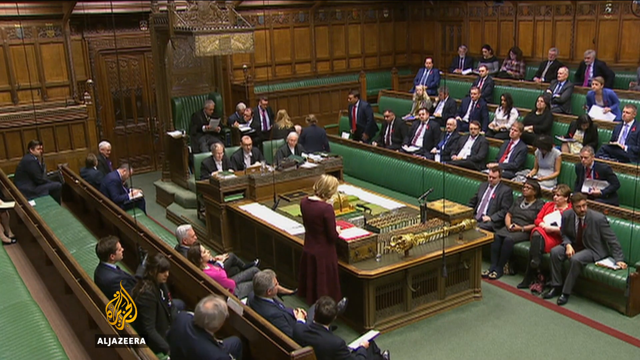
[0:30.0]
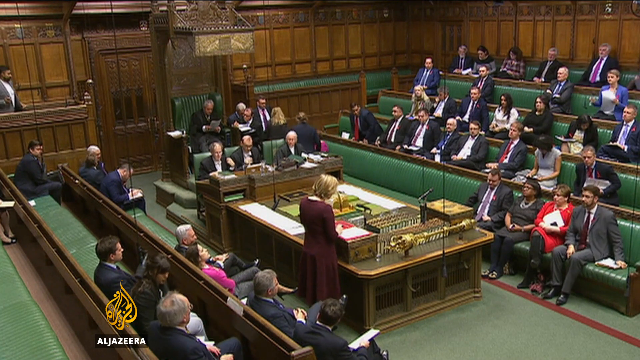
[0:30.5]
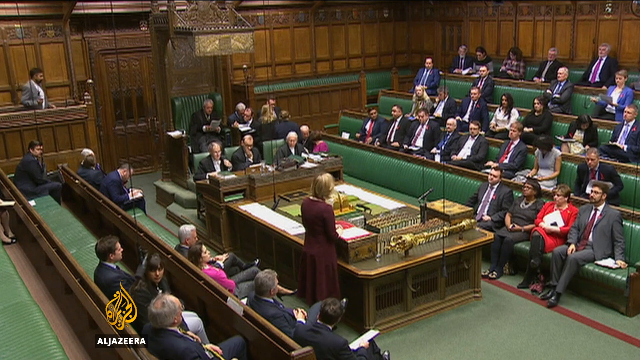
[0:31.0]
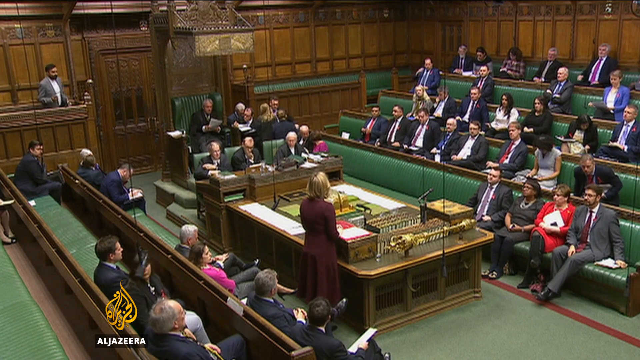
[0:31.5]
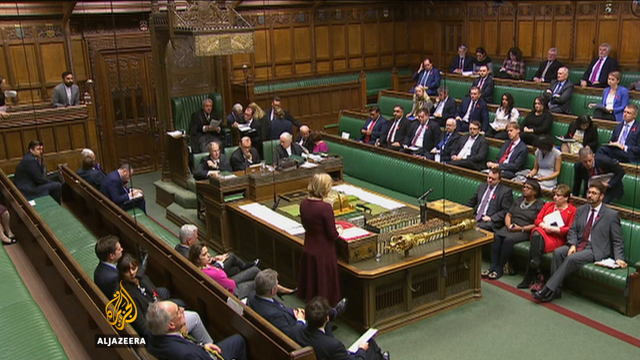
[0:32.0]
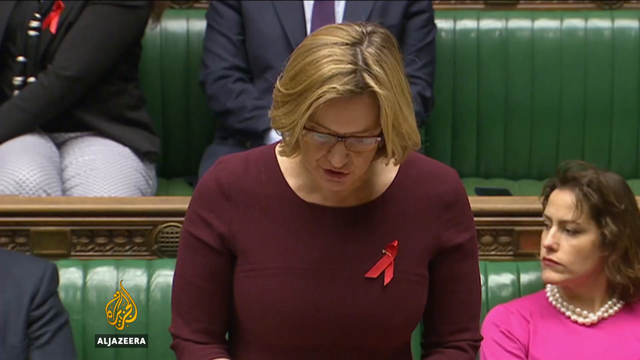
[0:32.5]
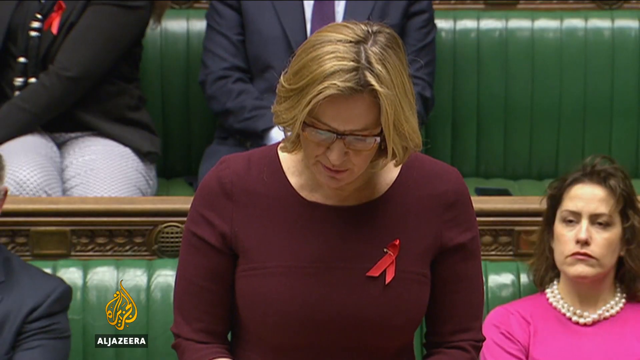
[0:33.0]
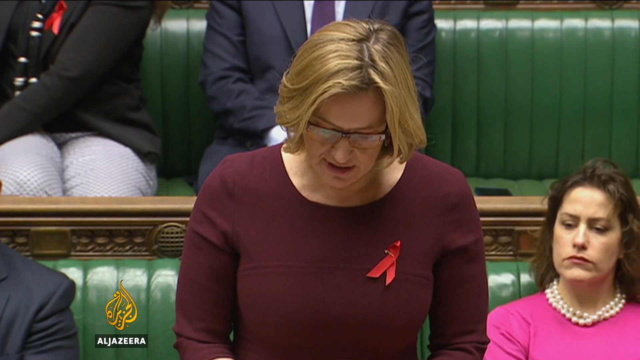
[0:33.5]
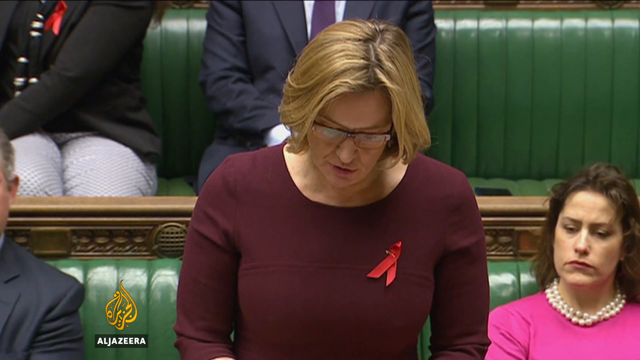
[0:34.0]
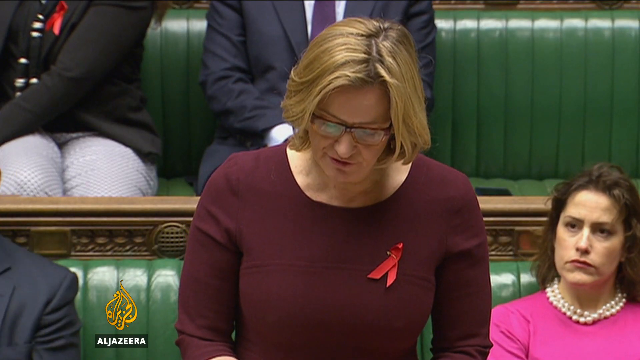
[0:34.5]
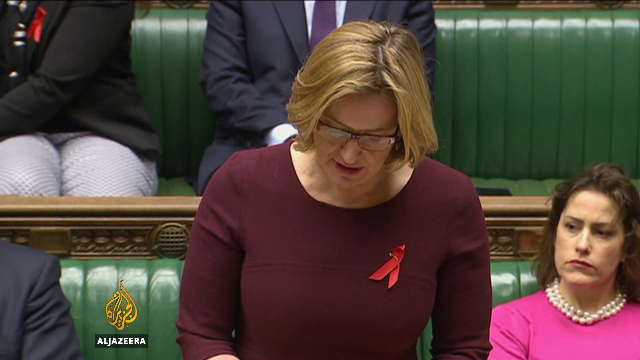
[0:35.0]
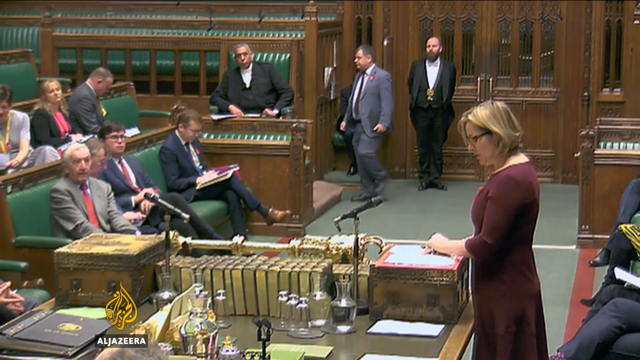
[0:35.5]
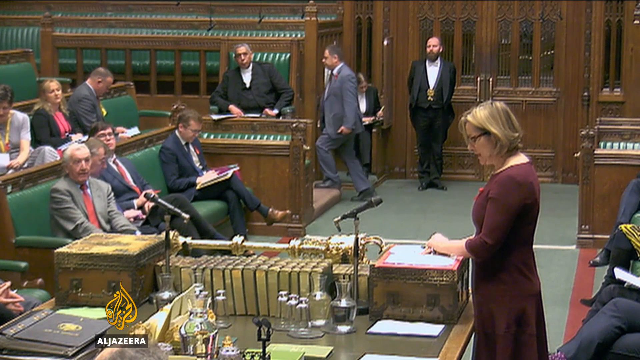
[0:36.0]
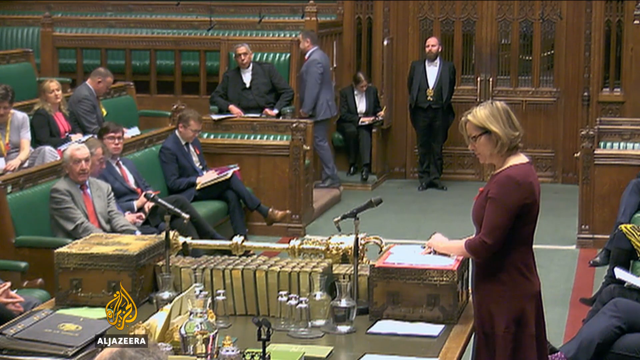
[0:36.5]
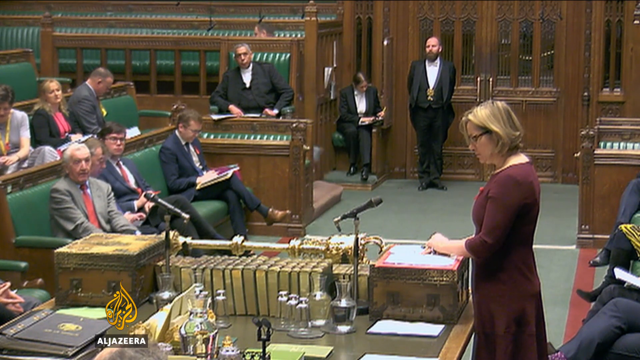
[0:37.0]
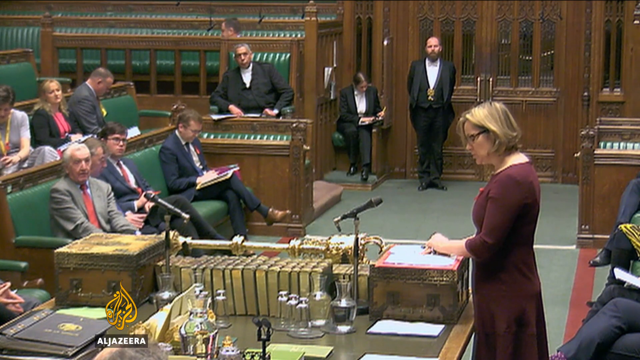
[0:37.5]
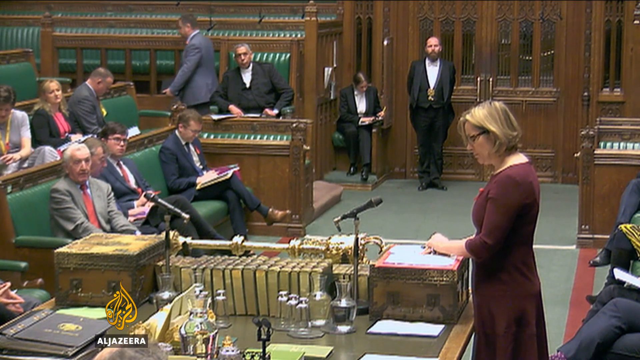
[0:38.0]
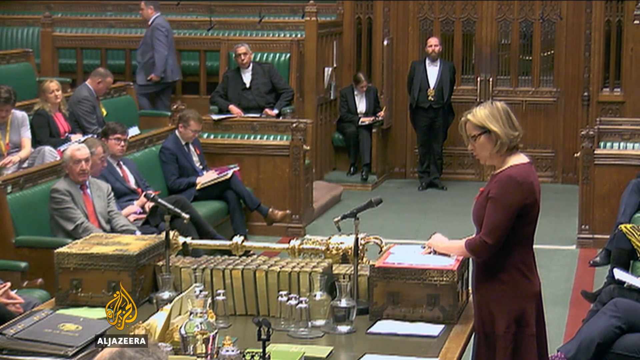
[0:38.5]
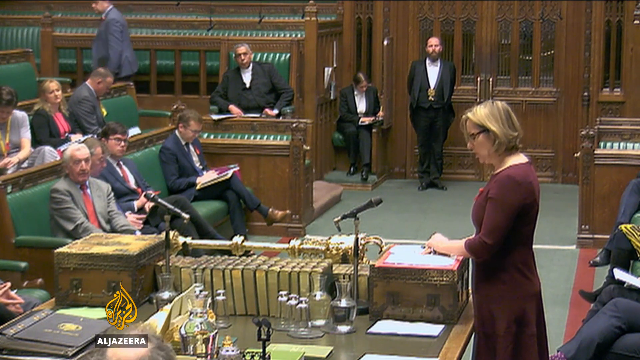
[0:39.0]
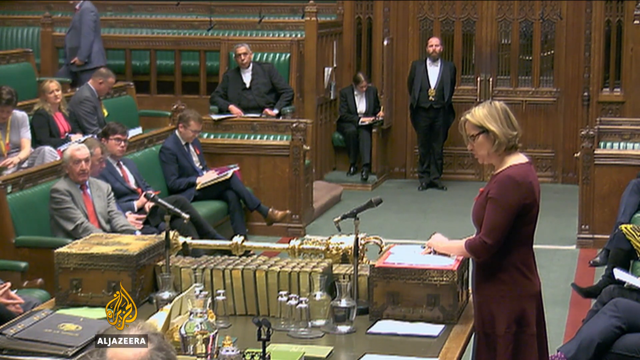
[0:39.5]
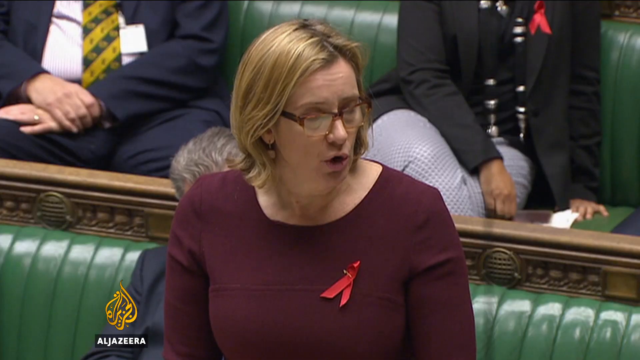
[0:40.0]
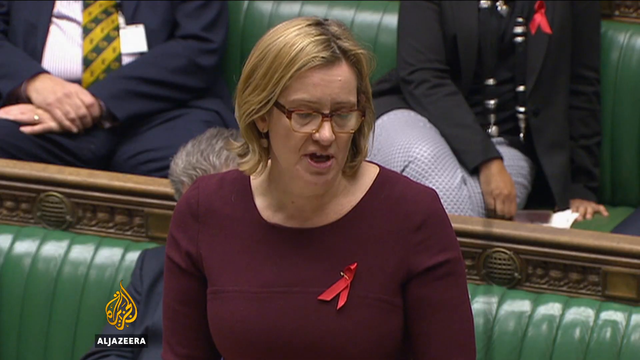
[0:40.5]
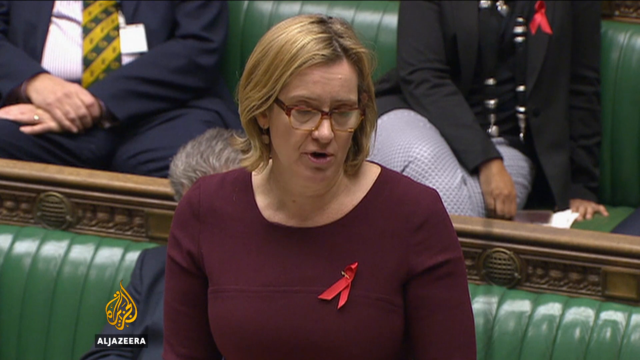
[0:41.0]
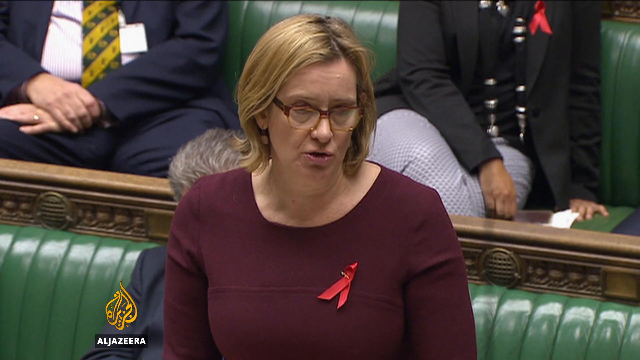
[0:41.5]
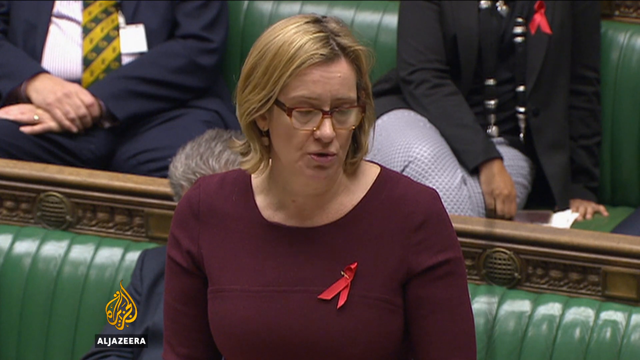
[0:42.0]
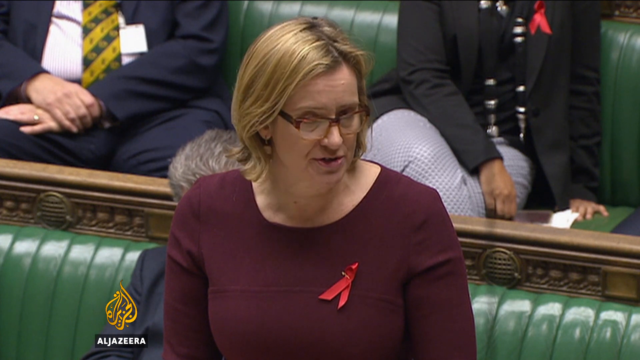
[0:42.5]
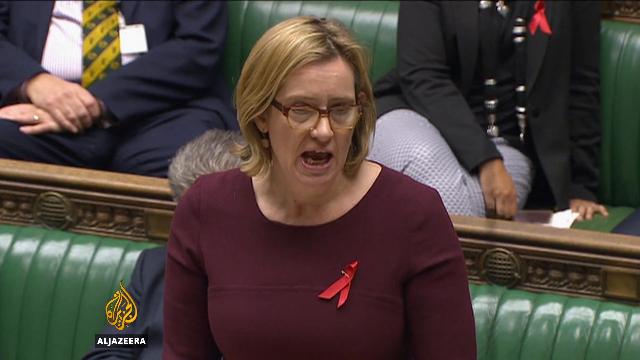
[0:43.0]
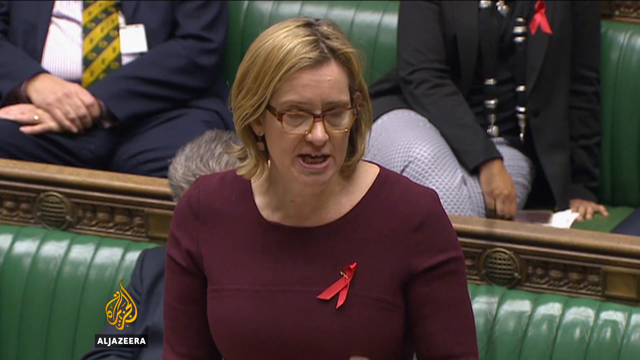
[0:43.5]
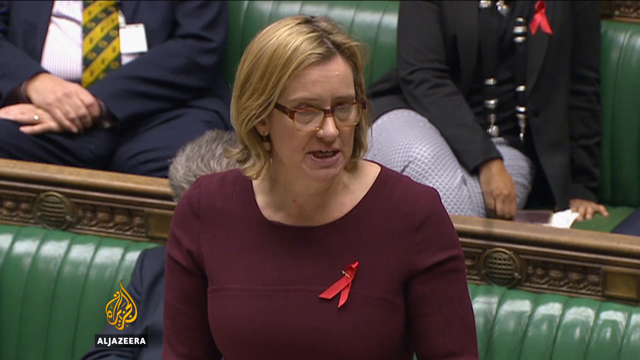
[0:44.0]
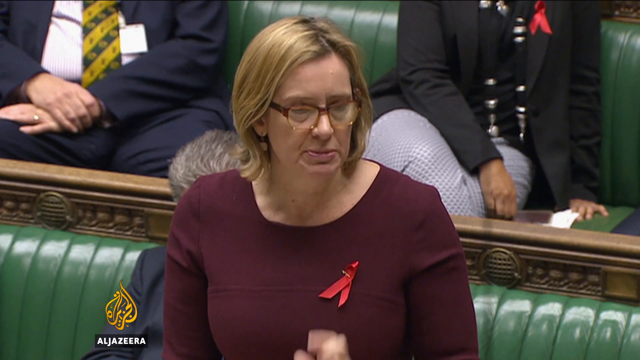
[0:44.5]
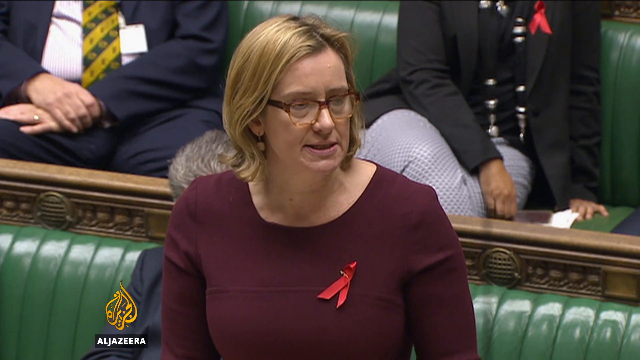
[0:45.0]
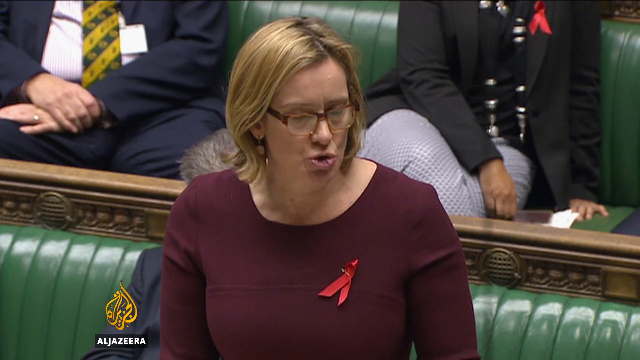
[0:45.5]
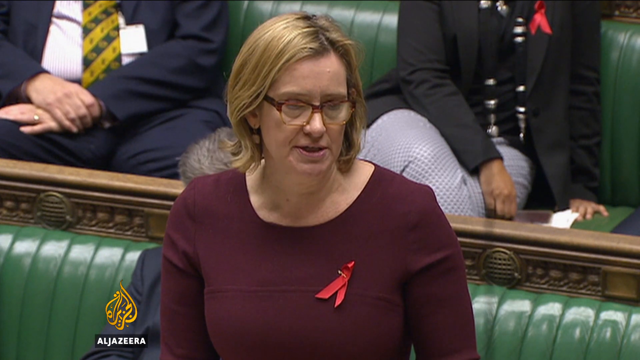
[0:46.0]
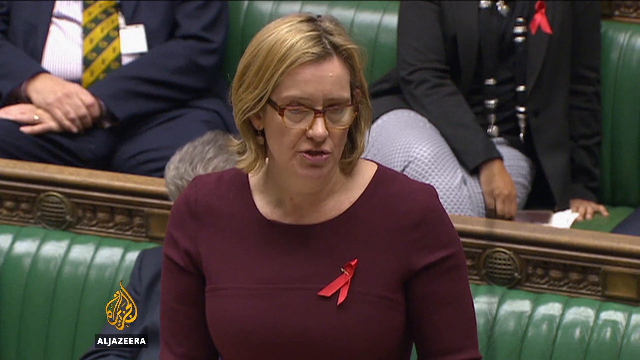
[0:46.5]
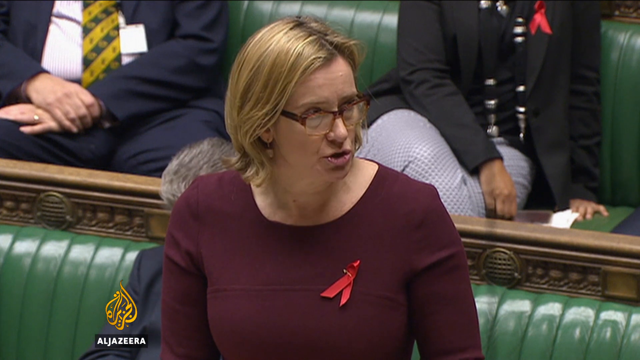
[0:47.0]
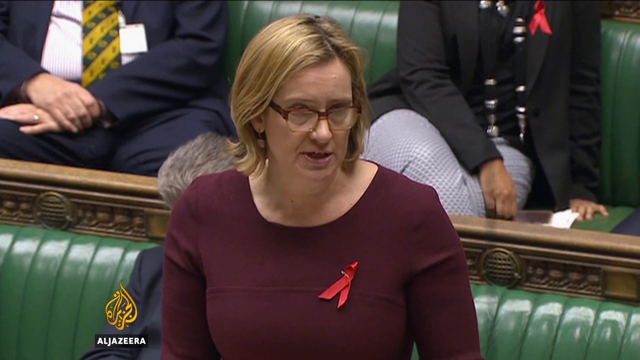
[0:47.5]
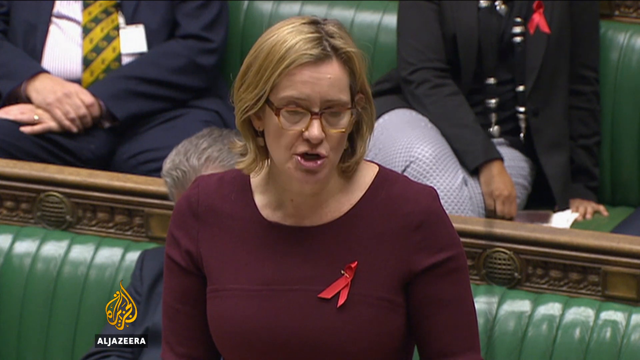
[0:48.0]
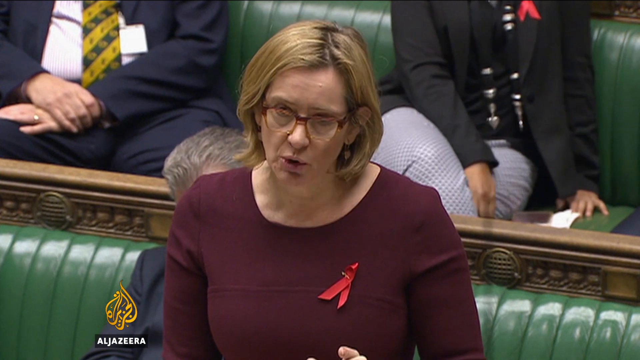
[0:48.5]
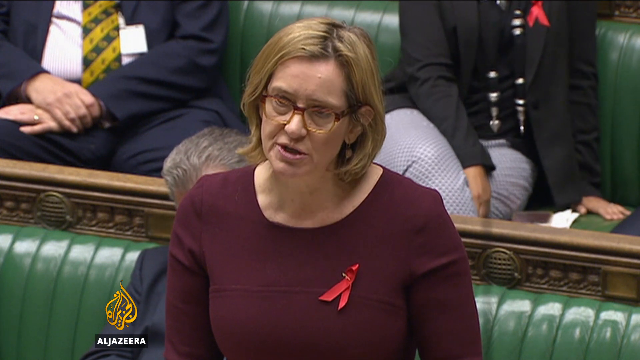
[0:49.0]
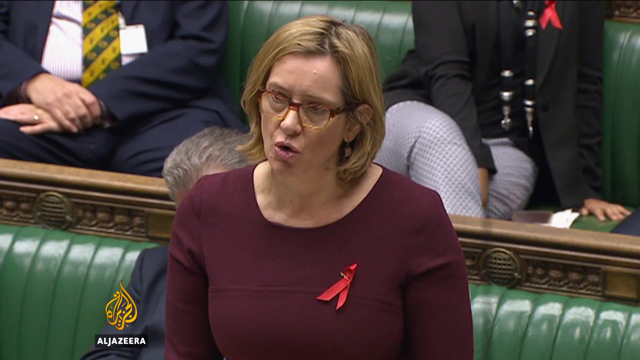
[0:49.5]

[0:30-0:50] The camera is still on the session of Parliament. The screen then cuts to a close-up of a woman speaking. She has short blonde hair and wears glasses and a long-sleeved purple dress with a red ribbon on it. She is speaking at a table in the center of the room, with books on the table and a microphone coming up from the table behind her. More green benches are set at different levels. The room has wooden walls and looks very old and very small. There are five levels of stadium-style seating, long green benches spanning the length of the room, and in the center there is a large wooden table. Three people are seated at the left side of the table, facing the right side of the room. The woman speaking stands on the right side of the table, facing the people toward the back of the room.